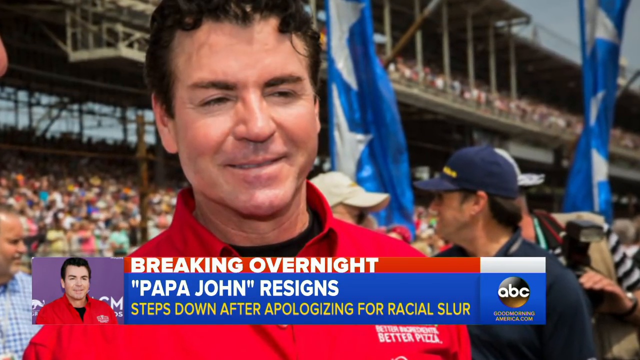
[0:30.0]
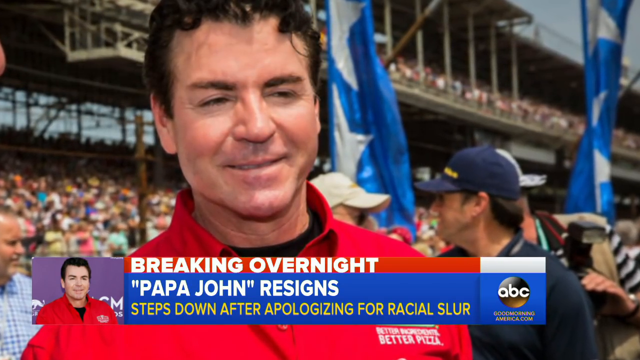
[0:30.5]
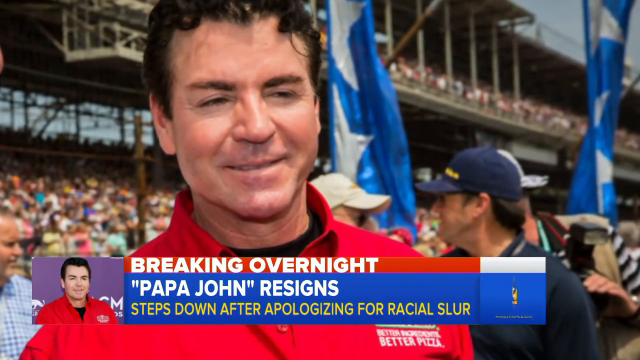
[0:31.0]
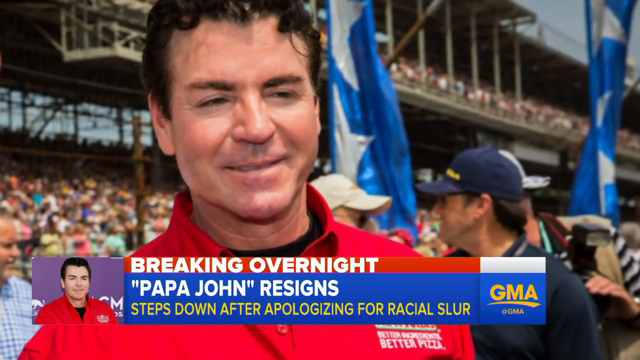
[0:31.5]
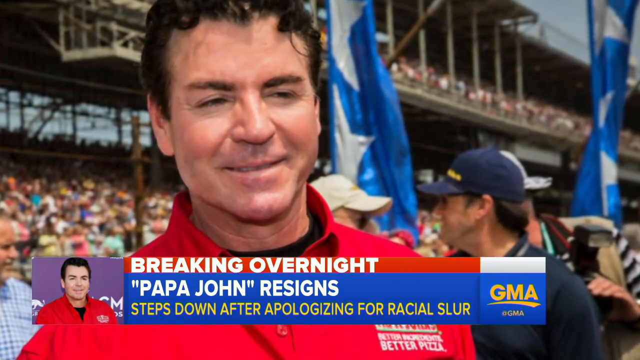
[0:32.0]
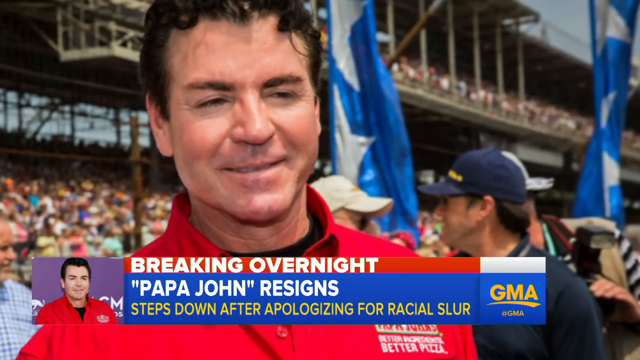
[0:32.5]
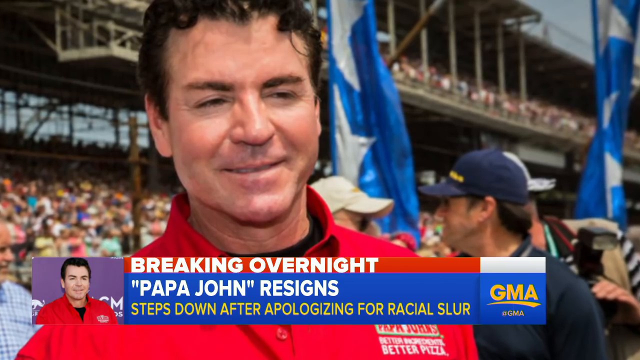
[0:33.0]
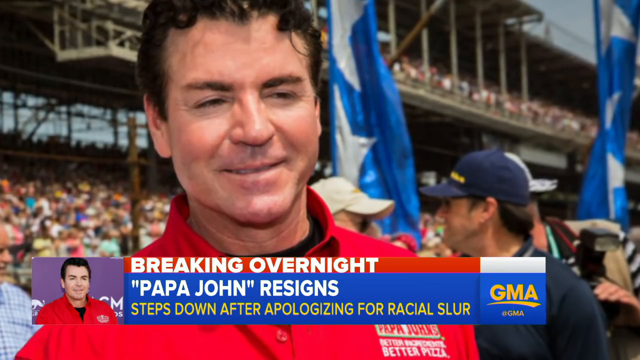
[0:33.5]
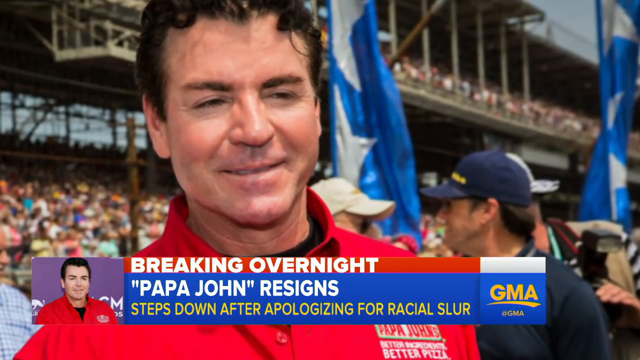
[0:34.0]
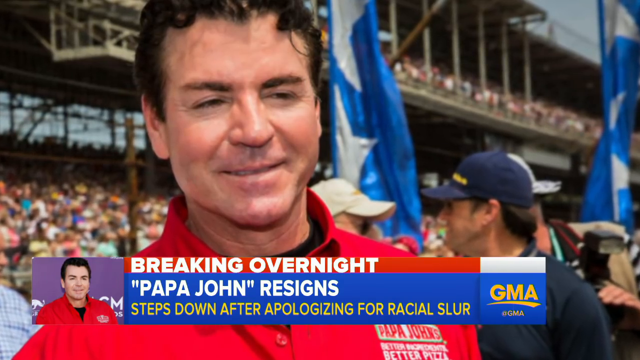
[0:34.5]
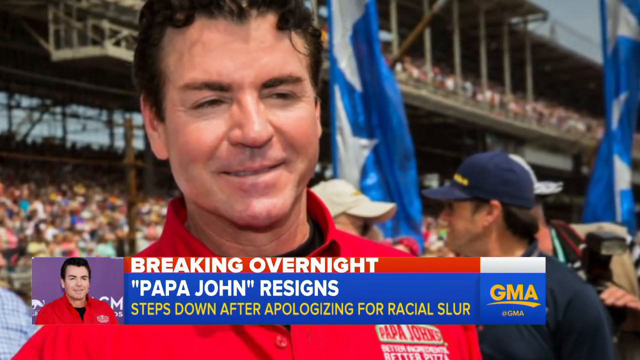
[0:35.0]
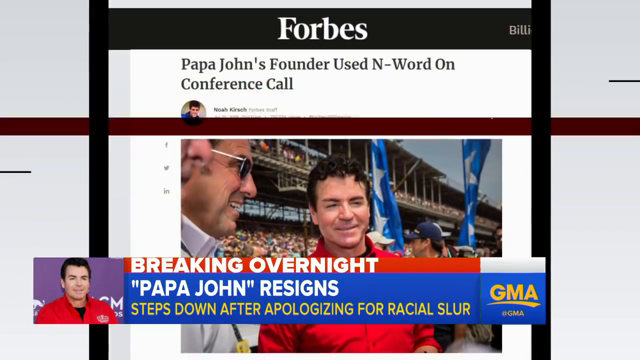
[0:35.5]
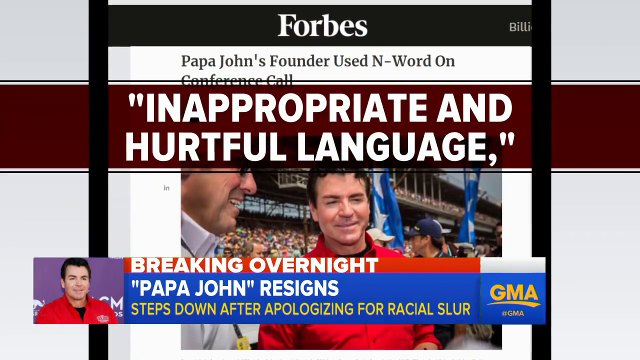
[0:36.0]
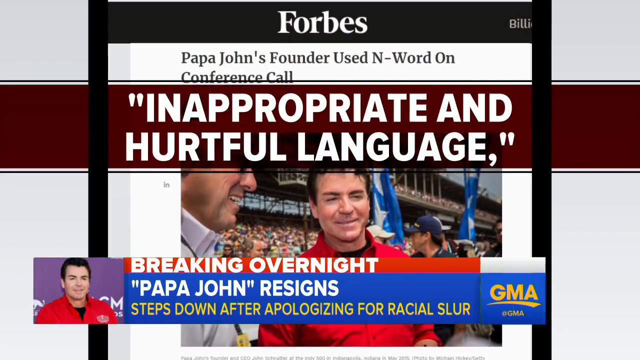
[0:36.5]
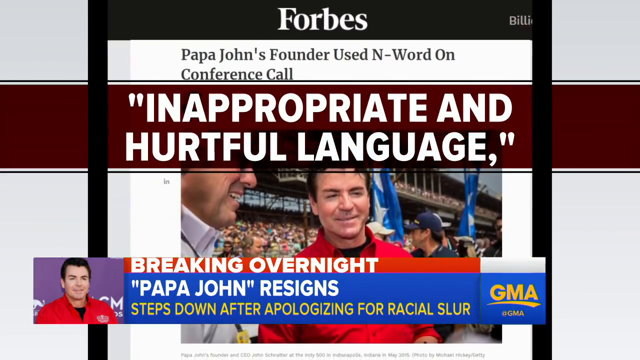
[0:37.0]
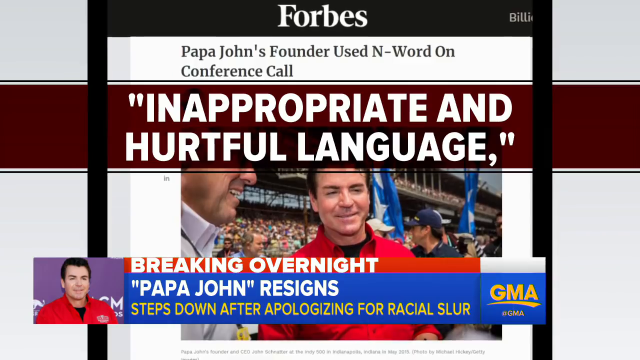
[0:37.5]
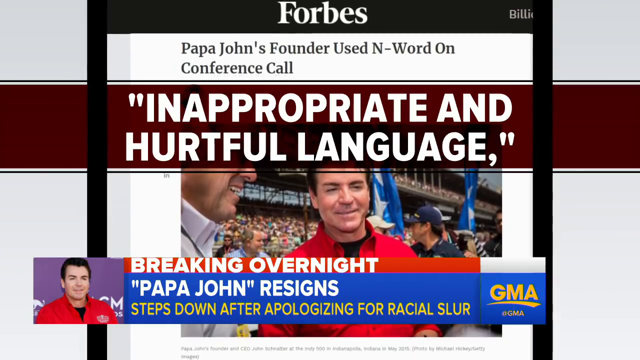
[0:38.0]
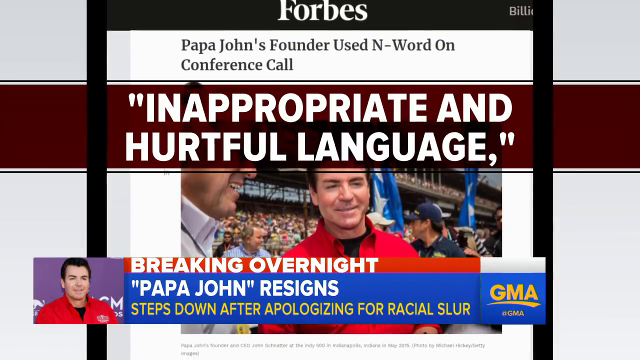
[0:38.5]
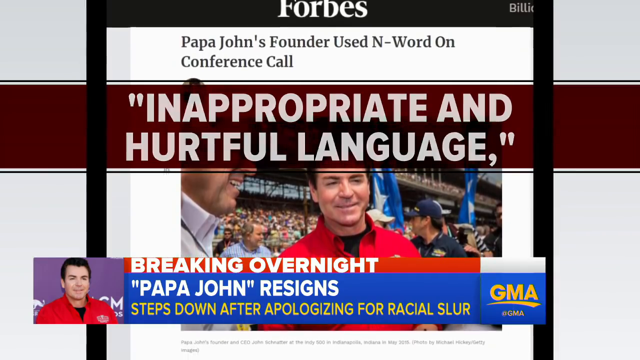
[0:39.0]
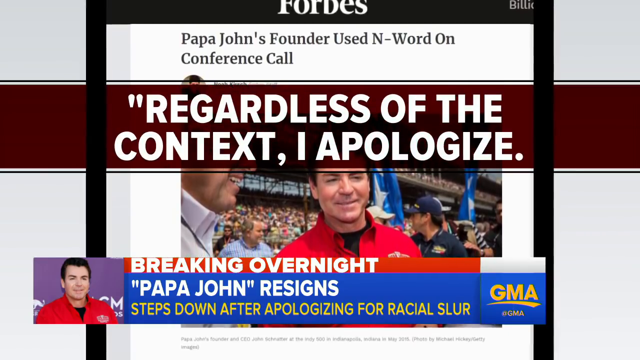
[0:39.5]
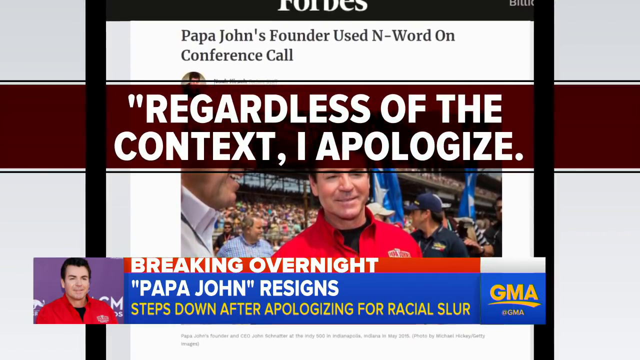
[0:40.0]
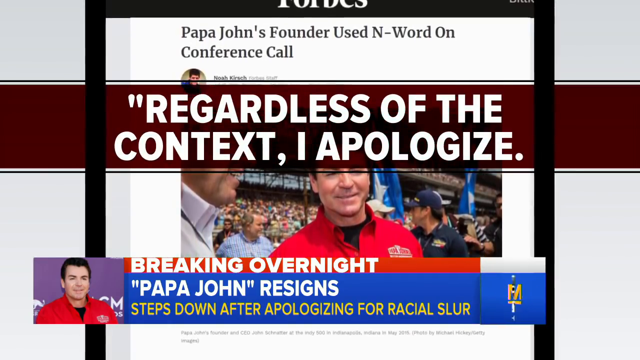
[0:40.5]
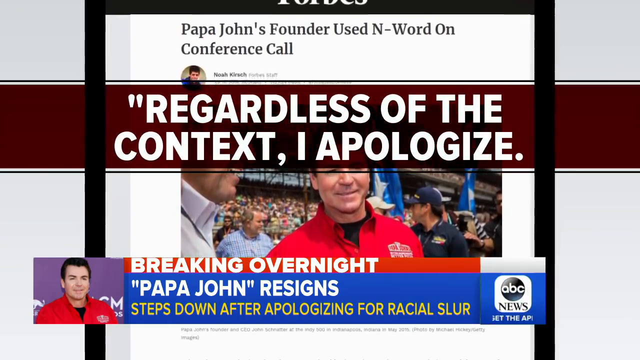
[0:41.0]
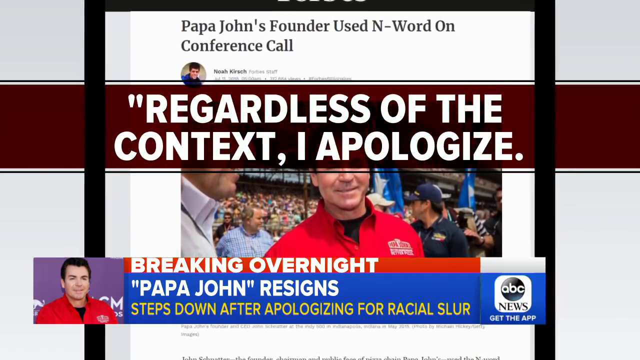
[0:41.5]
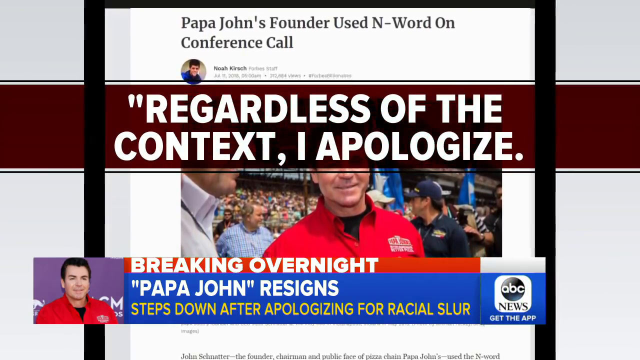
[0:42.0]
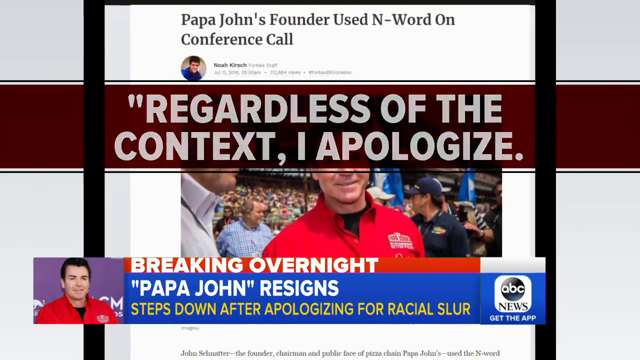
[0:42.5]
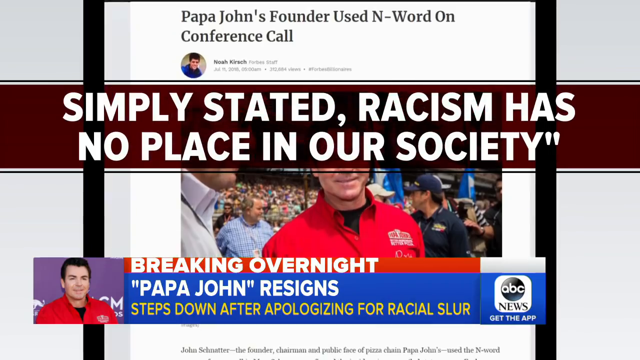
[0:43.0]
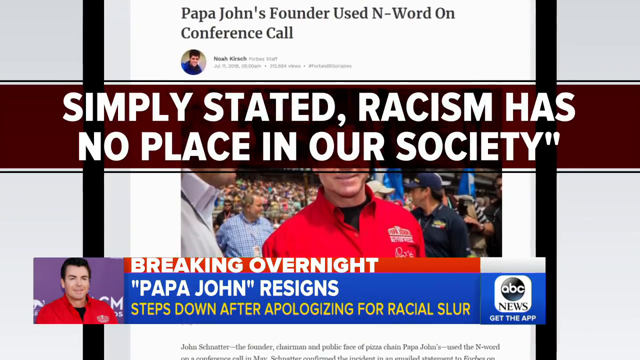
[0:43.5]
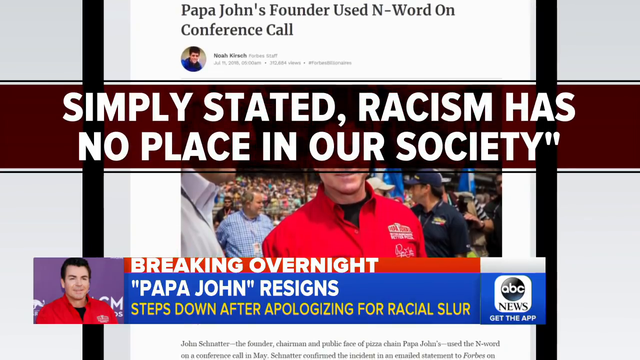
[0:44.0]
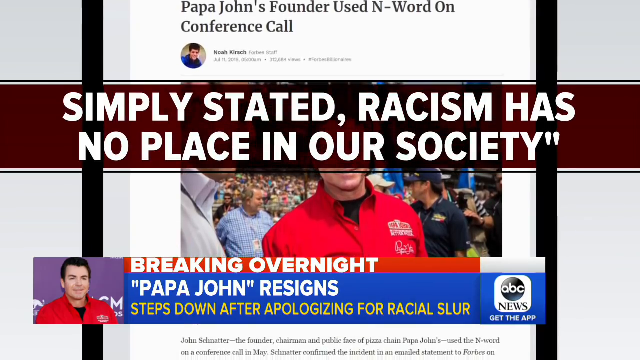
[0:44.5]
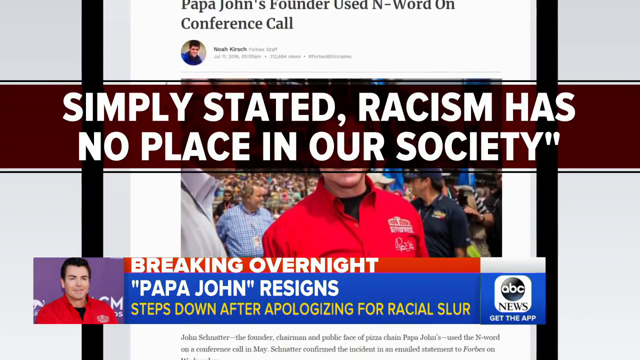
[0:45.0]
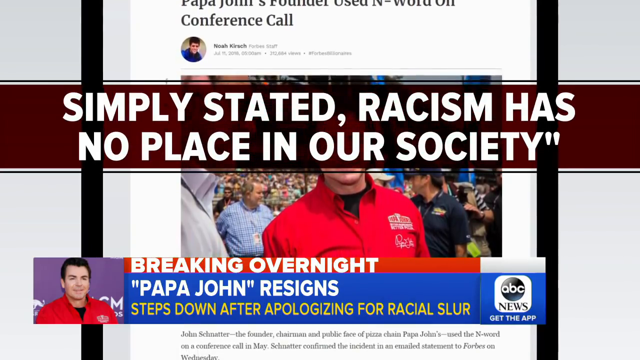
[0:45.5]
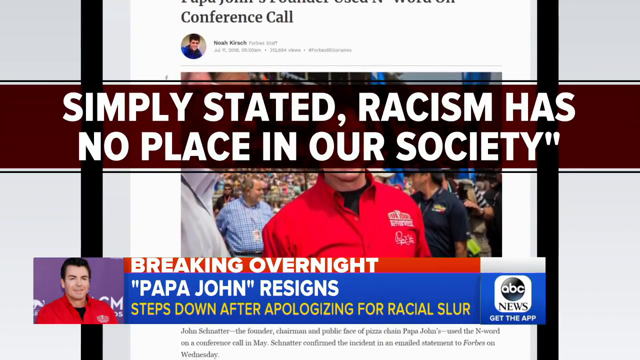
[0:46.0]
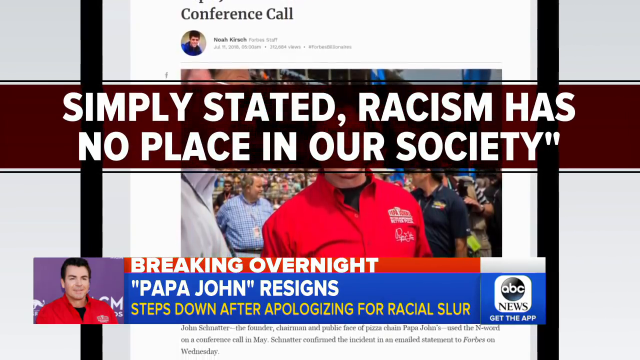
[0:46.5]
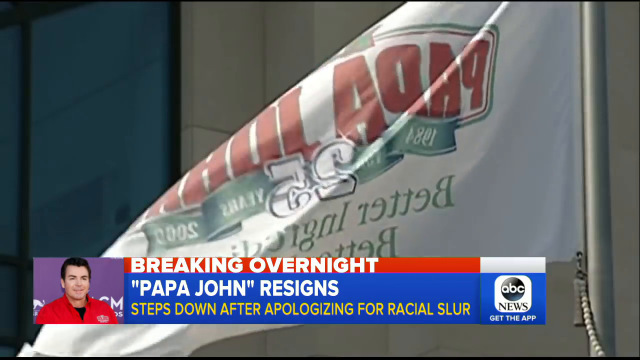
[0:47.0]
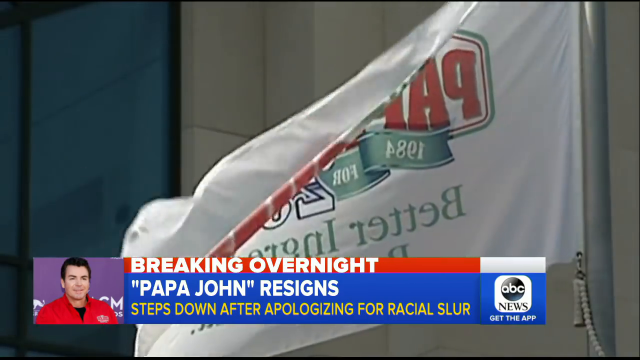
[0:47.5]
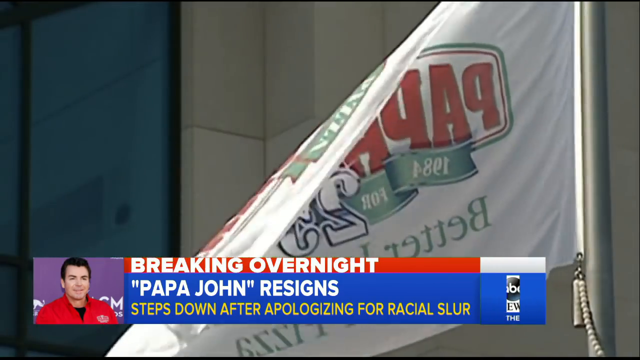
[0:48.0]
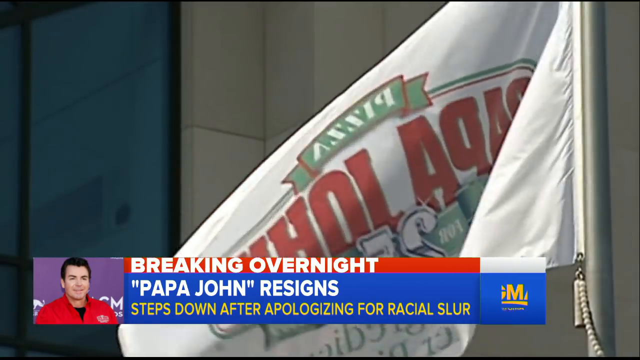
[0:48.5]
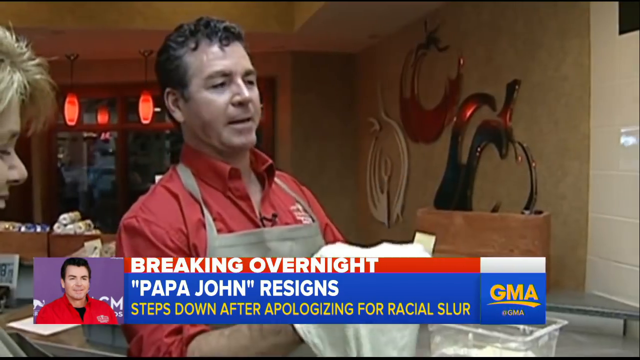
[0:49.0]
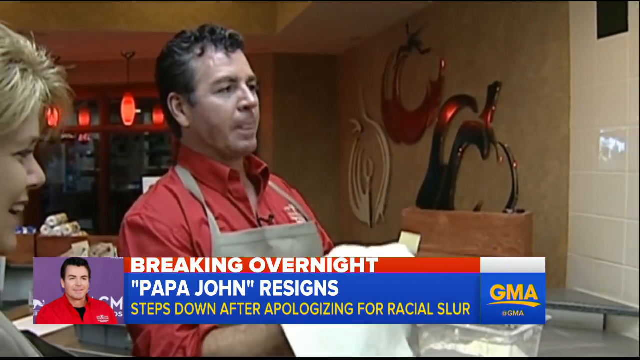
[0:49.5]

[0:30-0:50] The man stands next to the stadium. The report says Papa John used the N-word on a conference call, calling it inappropriate and hurtful language, and that he stepped down after apologizing, with the statement "Regardless of the context, I apologize. Simply stated, racism has no place in our society." A flag of Papa John is shown. He is then seen kneading dough in a kitchen with another person, looking like they are hosting a cooking show, with cameras surrounding them. He handles the dough in a professional manner, as if he knows what he is doing.